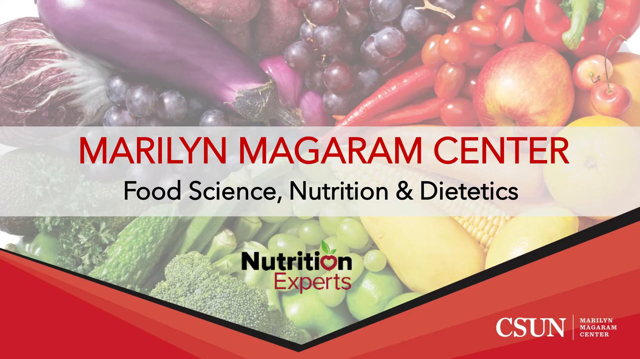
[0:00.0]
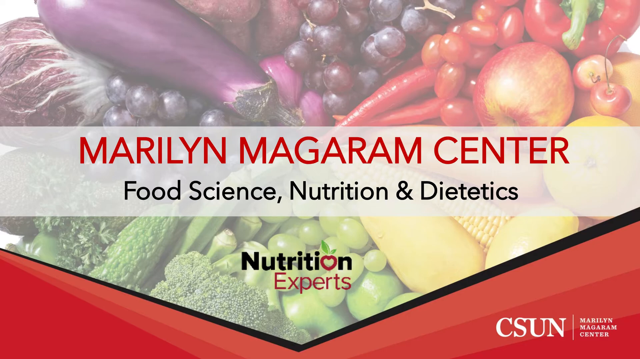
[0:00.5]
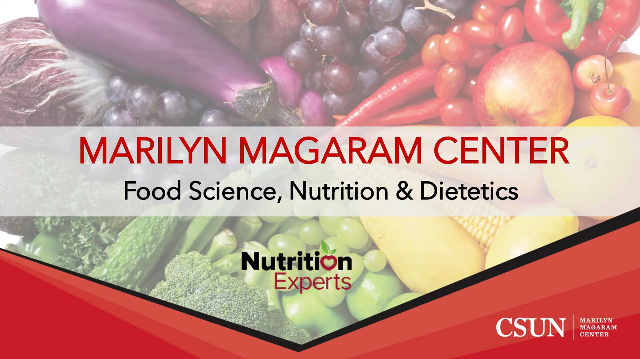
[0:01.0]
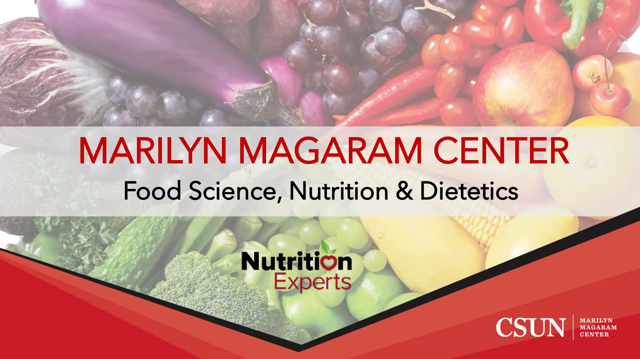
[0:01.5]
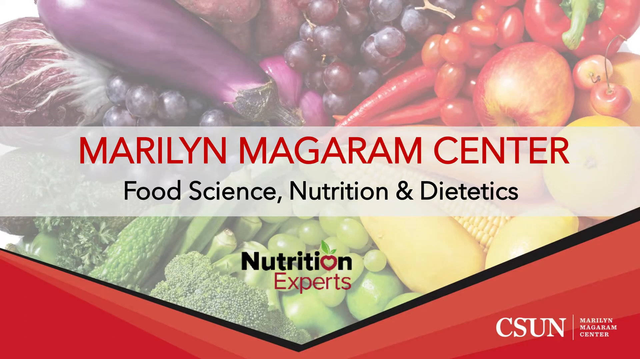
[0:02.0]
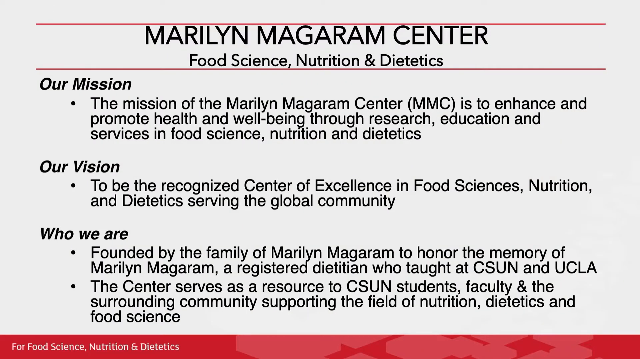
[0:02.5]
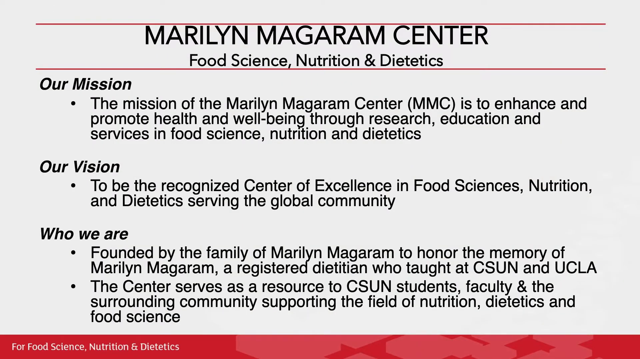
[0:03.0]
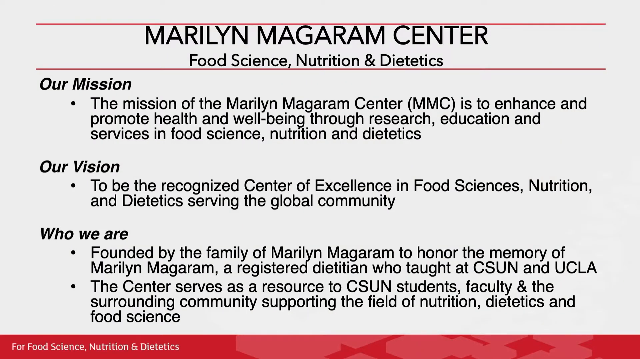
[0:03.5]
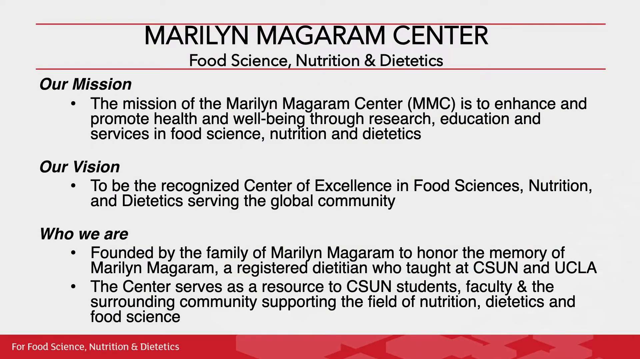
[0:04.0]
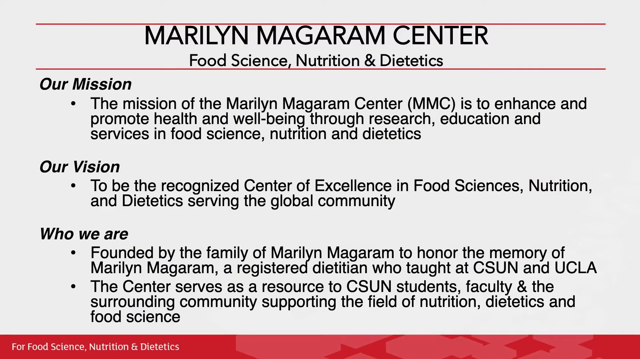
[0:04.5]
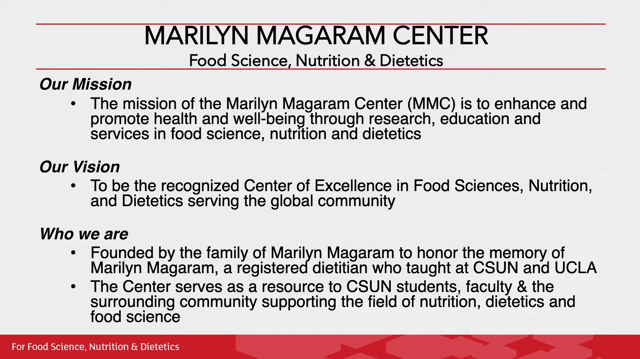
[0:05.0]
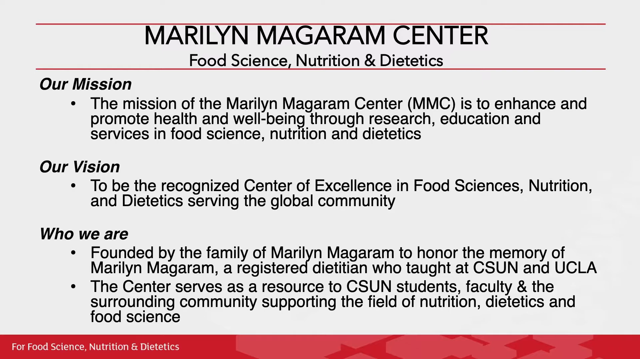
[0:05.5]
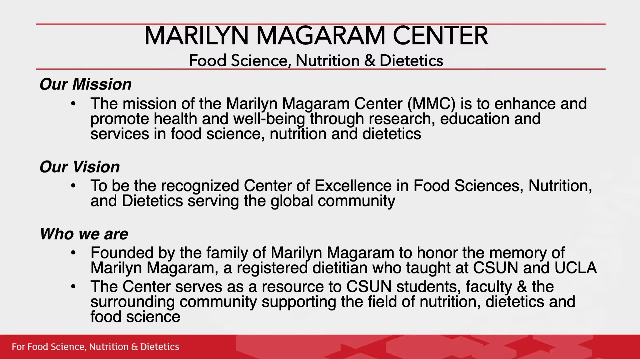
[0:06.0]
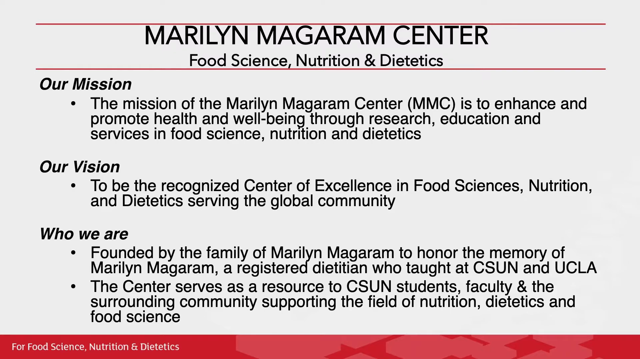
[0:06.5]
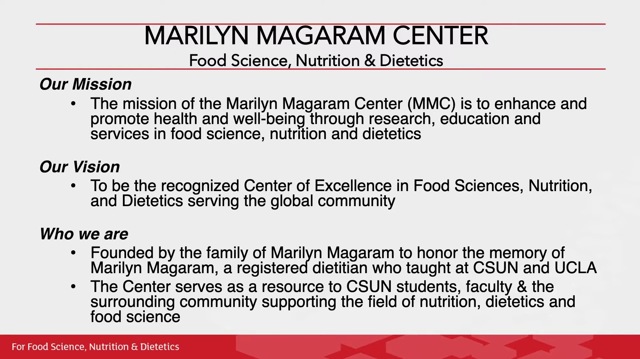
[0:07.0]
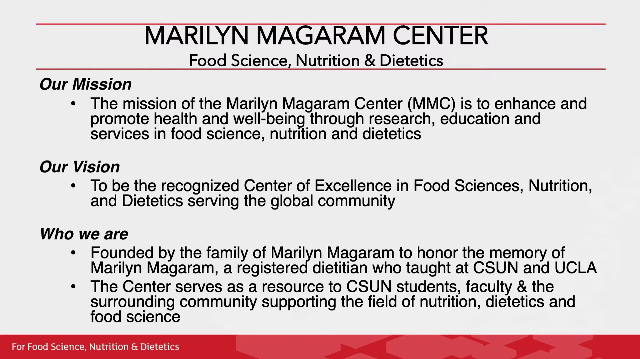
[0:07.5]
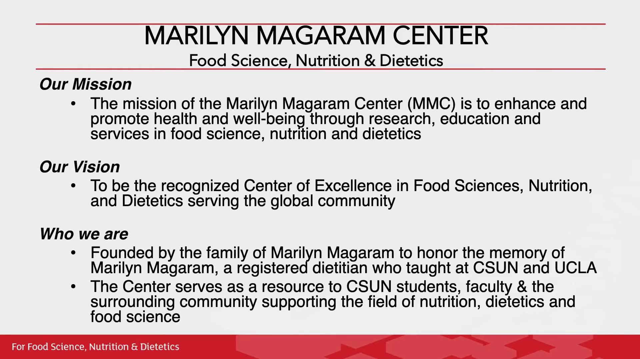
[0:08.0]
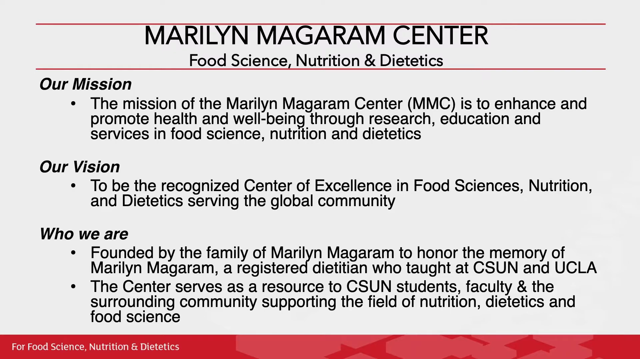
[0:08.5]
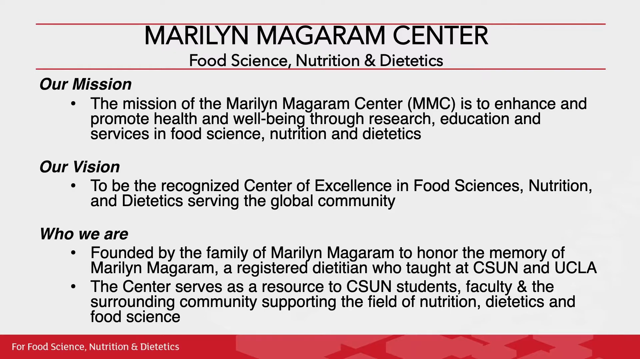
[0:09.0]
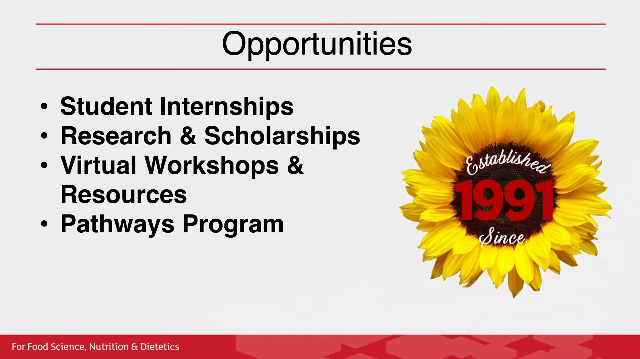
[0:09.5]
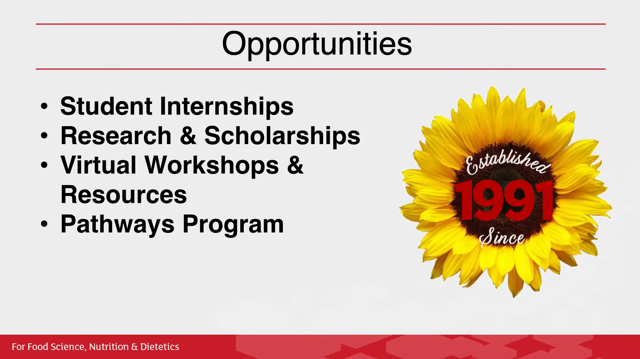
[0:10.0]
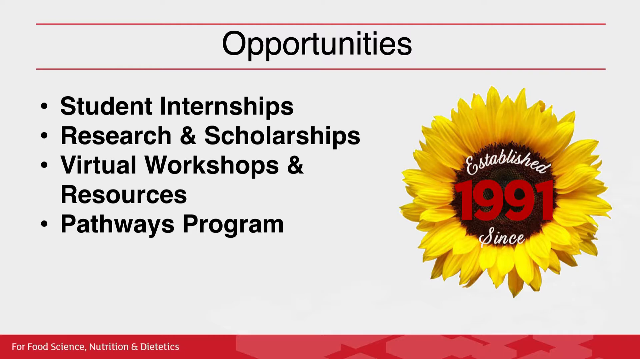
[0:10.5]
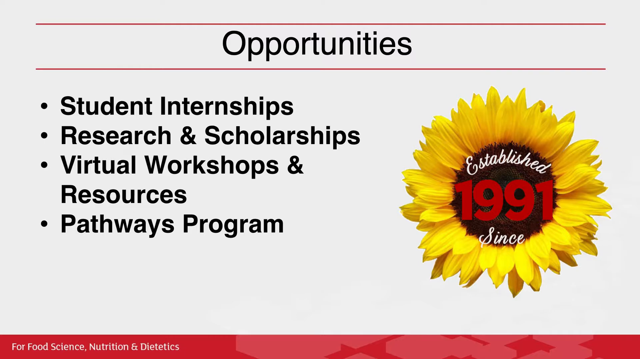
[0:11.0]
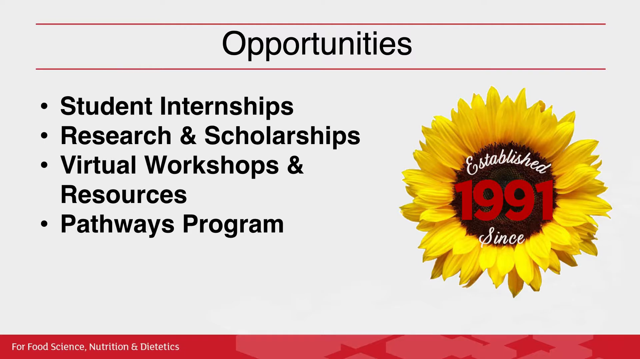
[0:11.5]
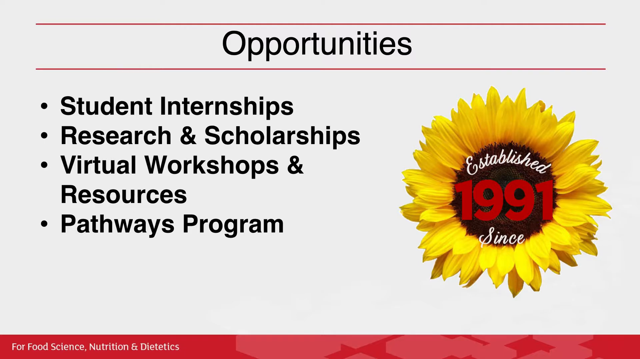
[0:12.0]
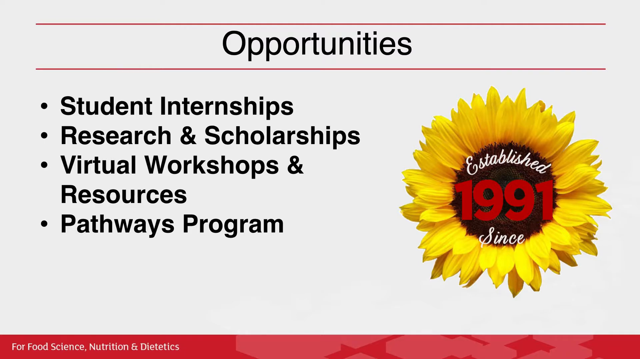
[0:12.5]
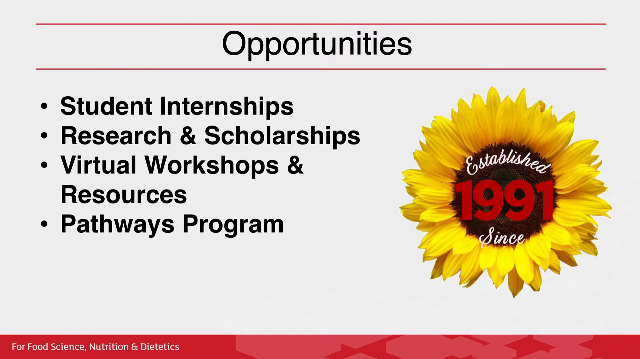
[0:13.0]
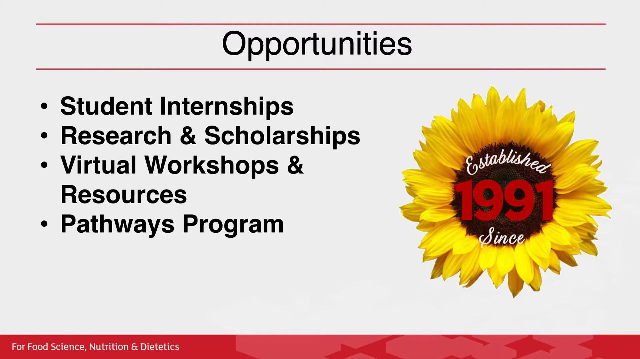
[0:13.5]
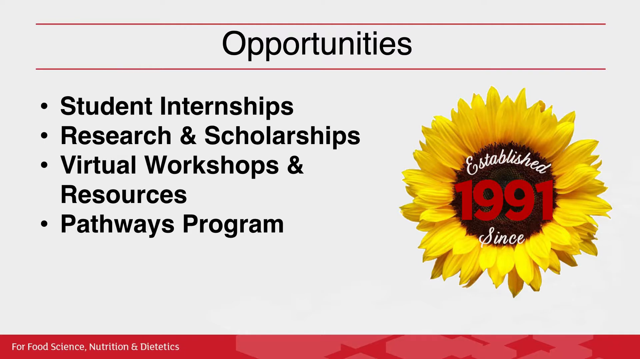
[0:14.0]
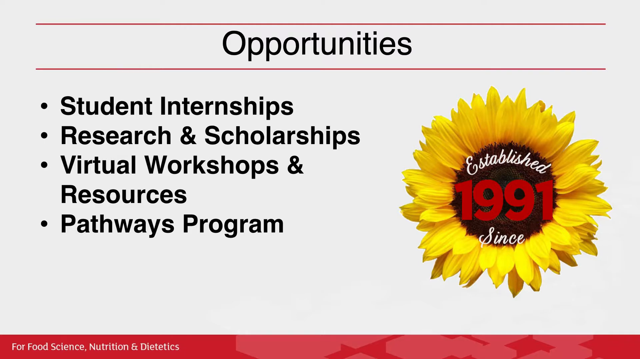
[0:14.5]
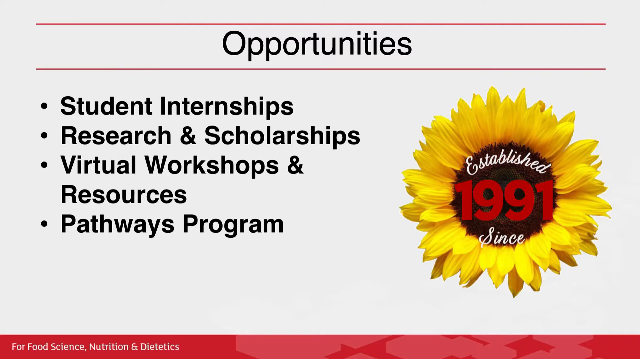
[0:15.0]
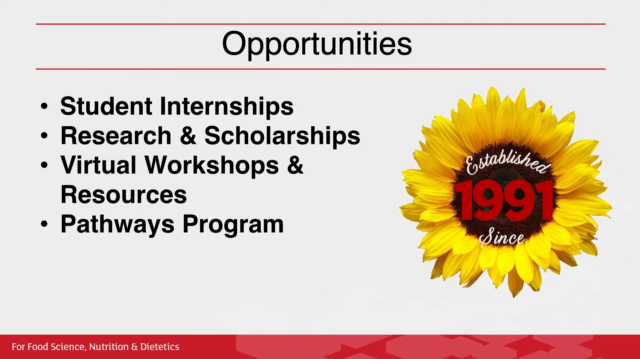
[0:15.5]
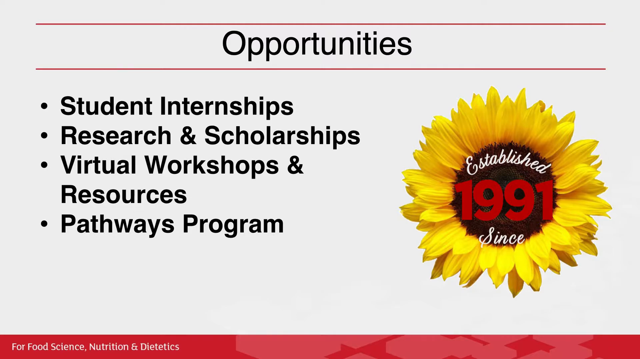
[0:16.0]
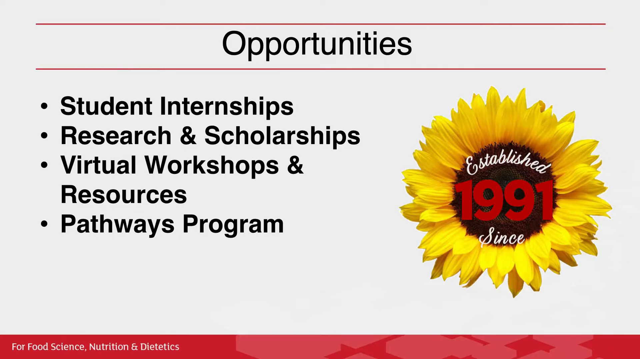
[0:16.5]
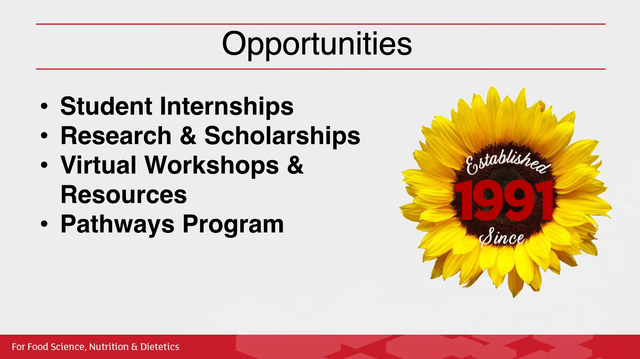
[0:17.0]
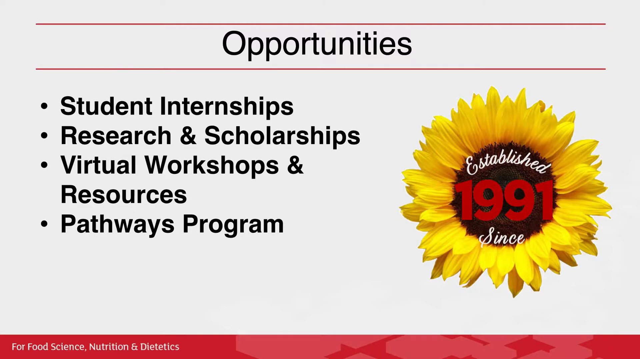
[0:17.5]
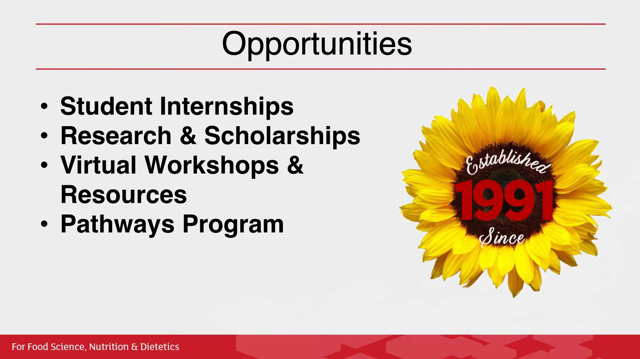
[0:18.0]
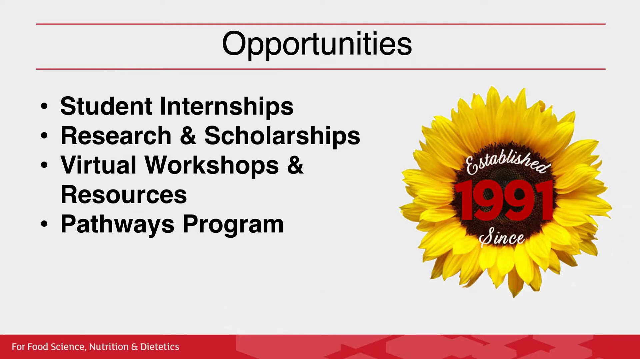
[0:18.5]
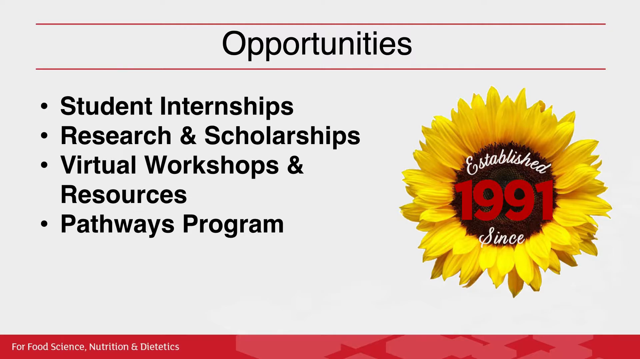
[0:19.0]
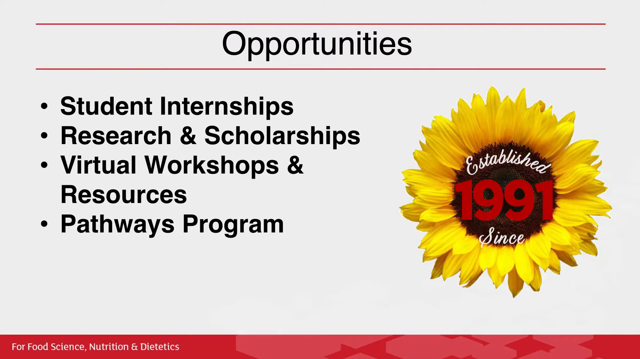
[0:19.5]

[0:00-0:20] A title screen reads "Maryland Magaram Center, Food Science, Nutrition, and Dietetics, Nutrition Experts." Behind the title is an image of many different healthy-looking vegetables, including eggplant, tomatoes, broccoli, celery, grapes, corn, cabbage and peppers. Next, a screen reads "Maryland Magaram Center, Food Science, Nutrition, and Dietetics. Our mission, the mission of the Maryland Magaram Center is to enhance and promote health and well-being through research, education, and services in food science, nutrition, and dietetics. Our vision, to be recognized center of excellence in food sciences, nutrition, and dietetics, serving the global community. Who we are, founded by the family of Maryland Magaram to honor the memory of Maryland Magaram, a registered dietician who taught at CSUN and UCLA. The center serves as a resource to CSUN students, faculty, and the surrounding community supporting the field of nutrition, dietetics, and food science."